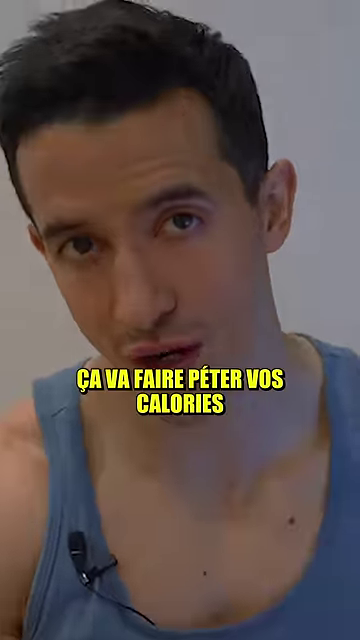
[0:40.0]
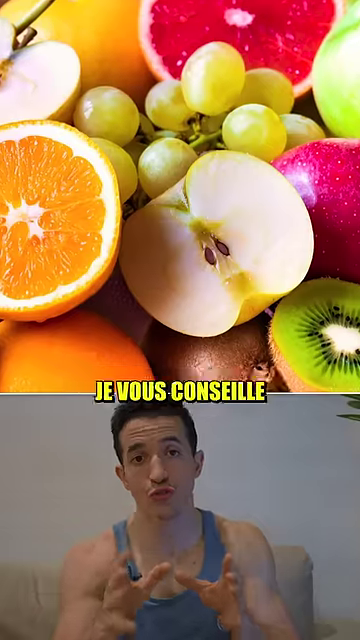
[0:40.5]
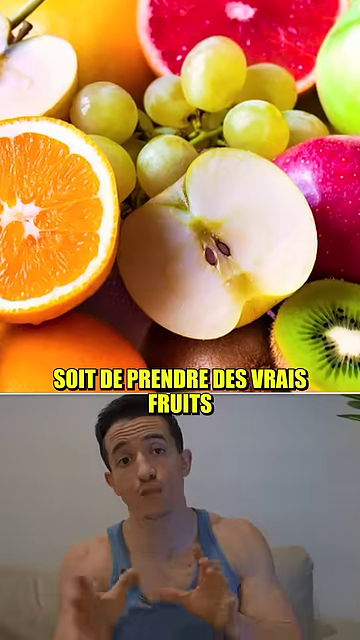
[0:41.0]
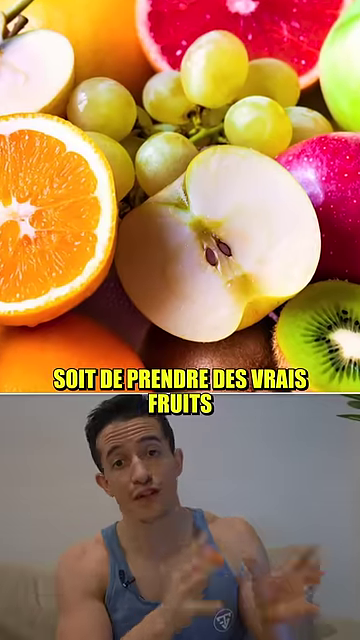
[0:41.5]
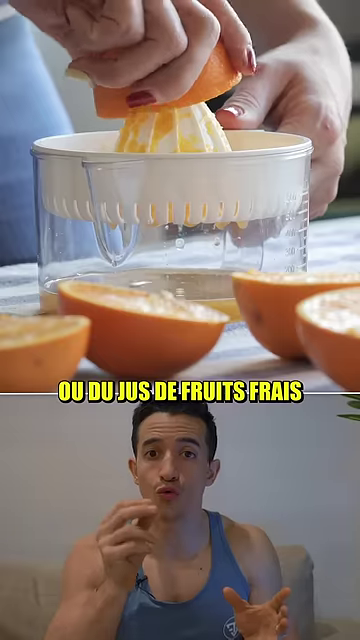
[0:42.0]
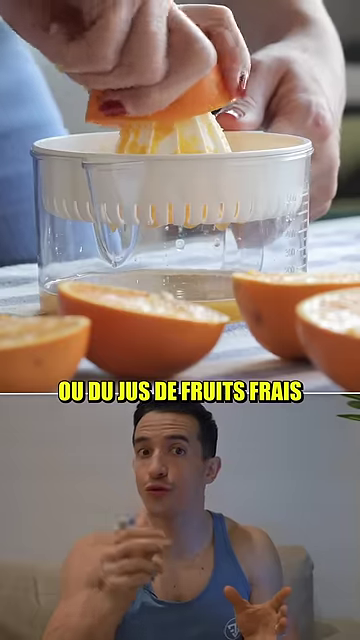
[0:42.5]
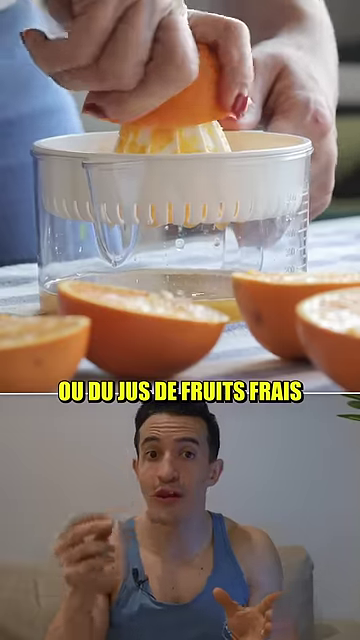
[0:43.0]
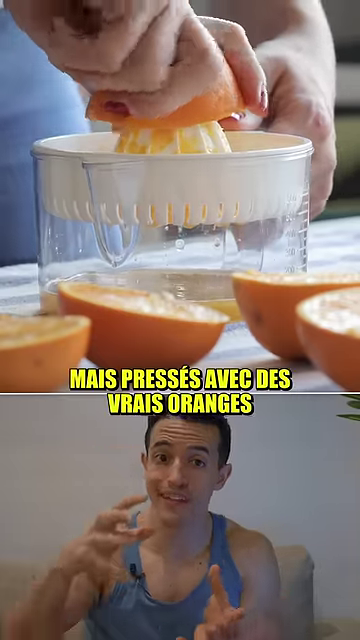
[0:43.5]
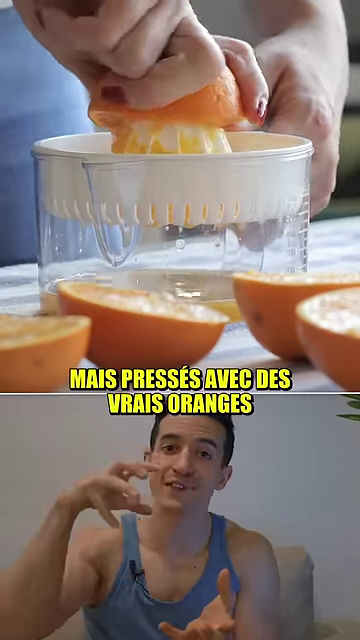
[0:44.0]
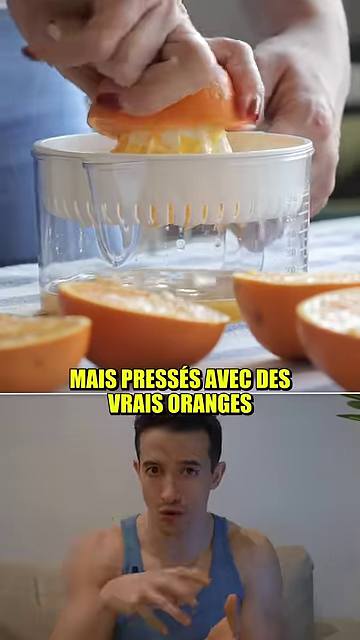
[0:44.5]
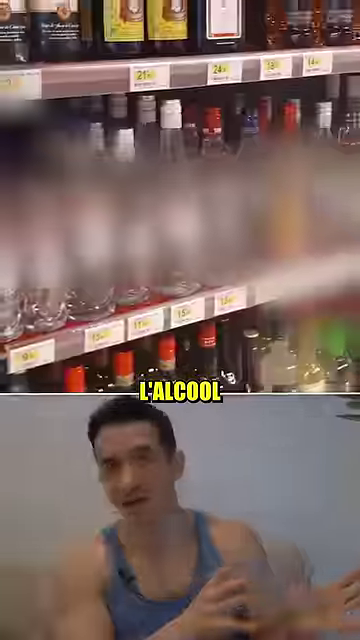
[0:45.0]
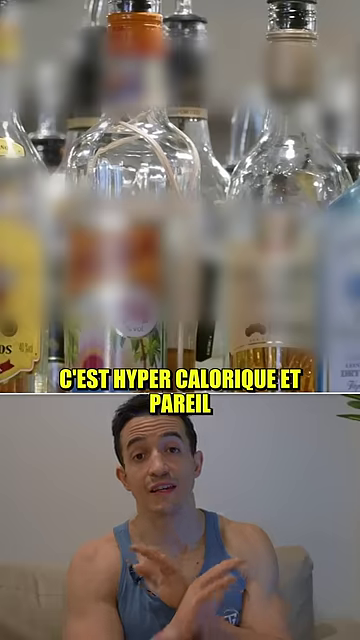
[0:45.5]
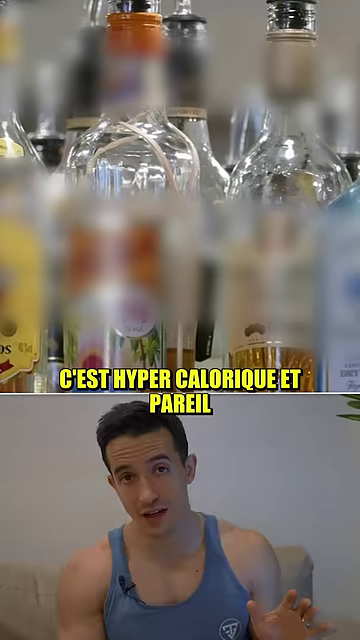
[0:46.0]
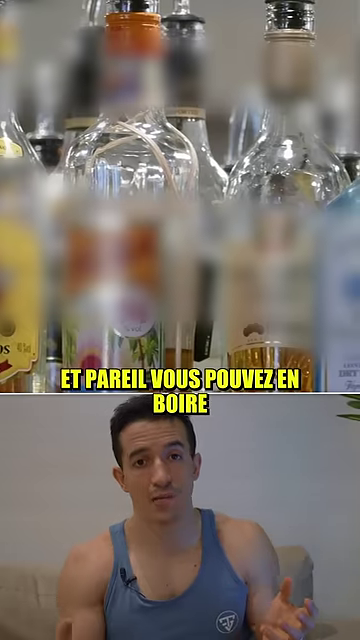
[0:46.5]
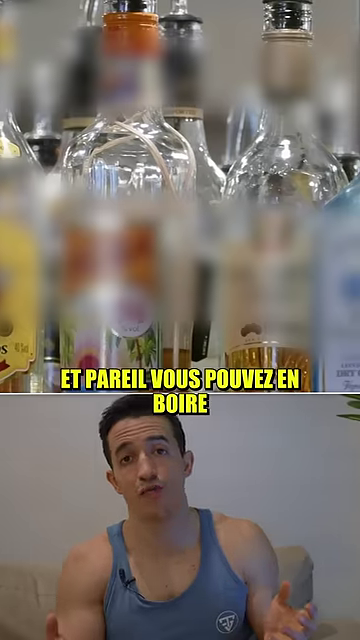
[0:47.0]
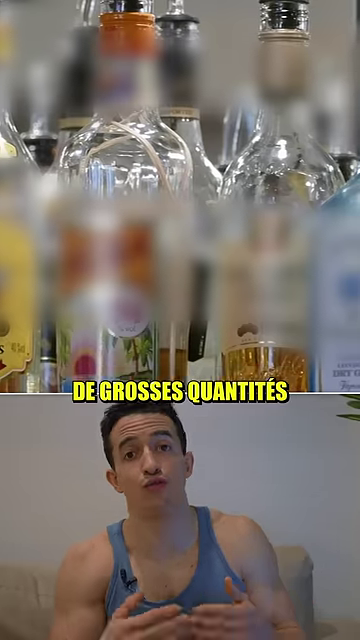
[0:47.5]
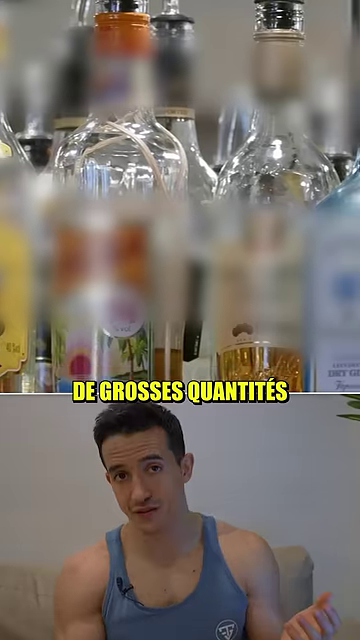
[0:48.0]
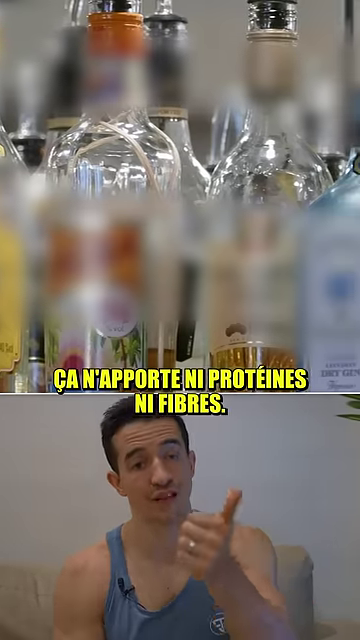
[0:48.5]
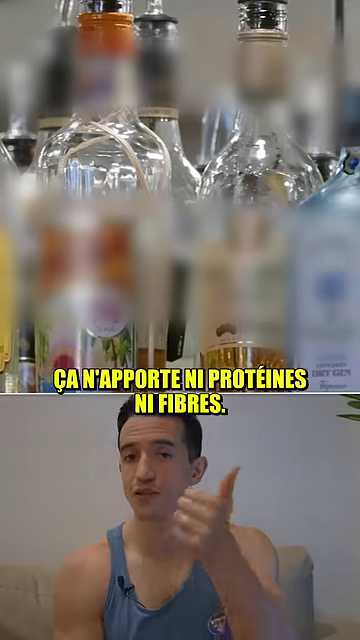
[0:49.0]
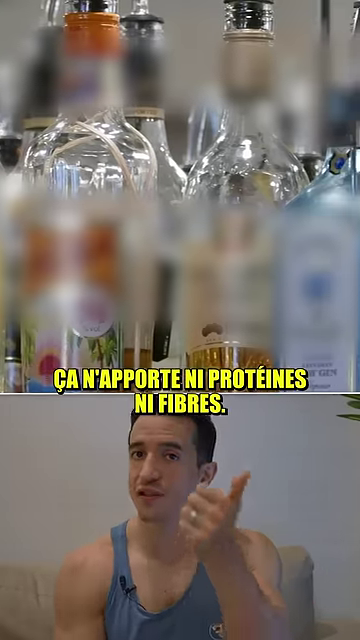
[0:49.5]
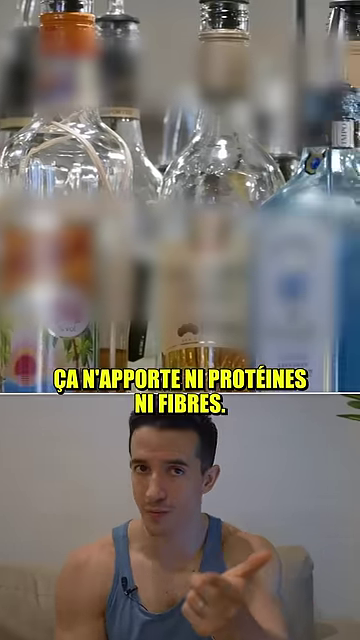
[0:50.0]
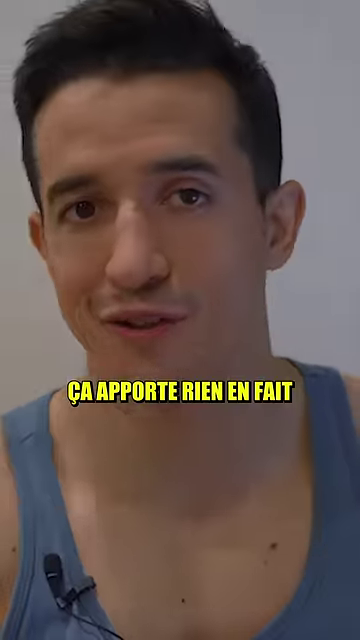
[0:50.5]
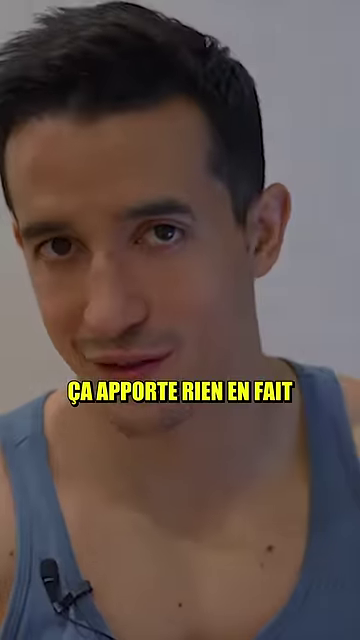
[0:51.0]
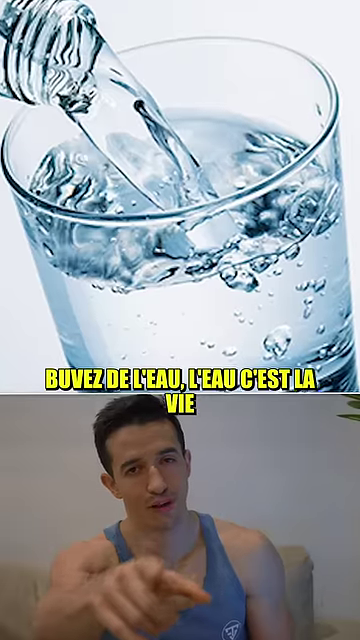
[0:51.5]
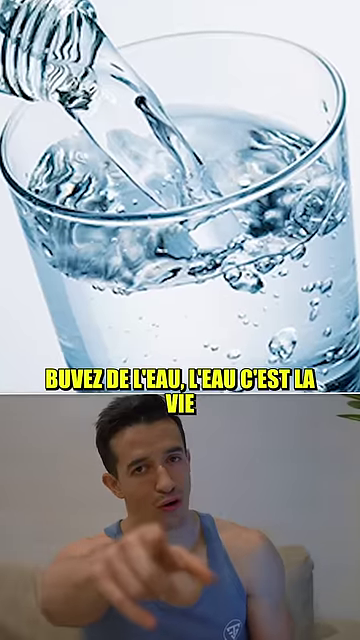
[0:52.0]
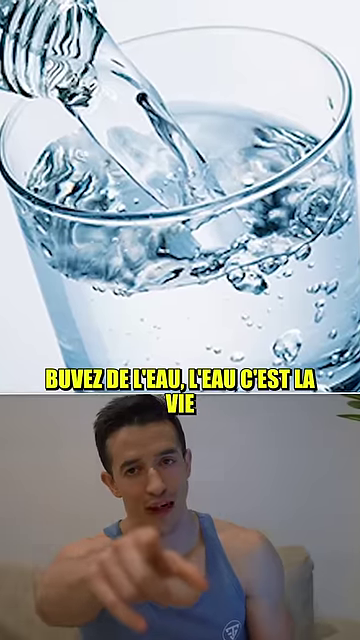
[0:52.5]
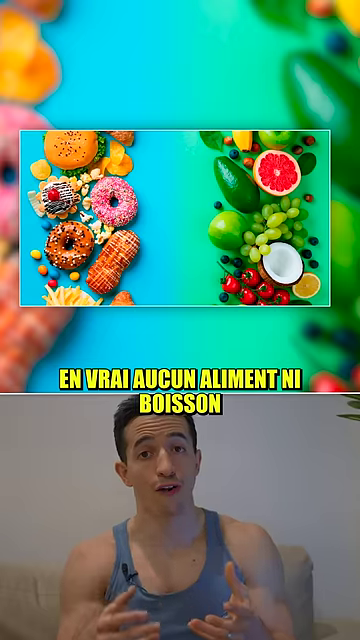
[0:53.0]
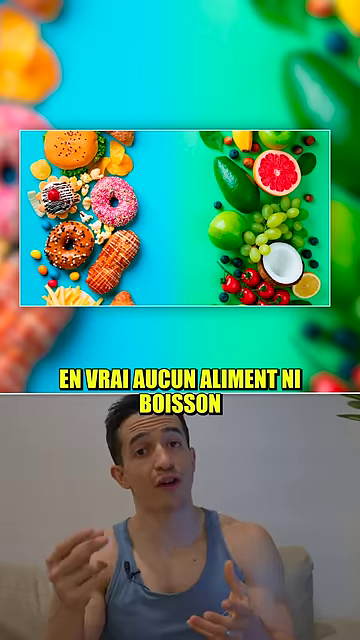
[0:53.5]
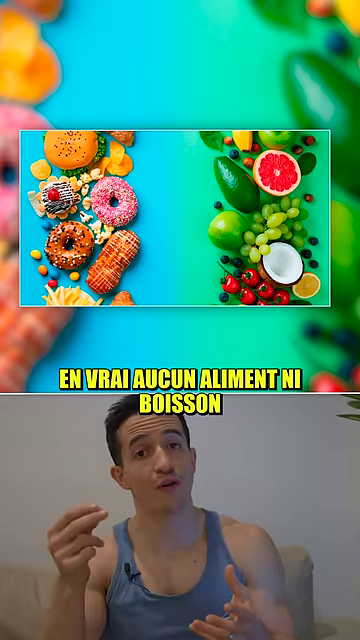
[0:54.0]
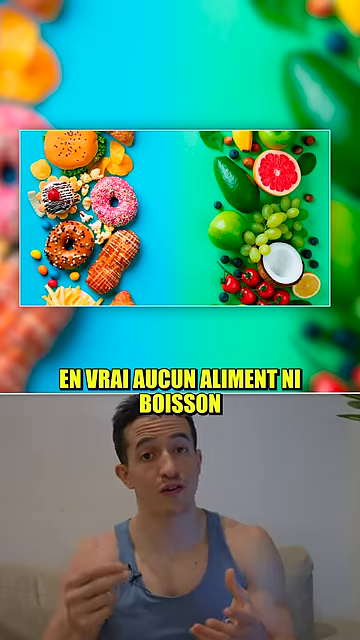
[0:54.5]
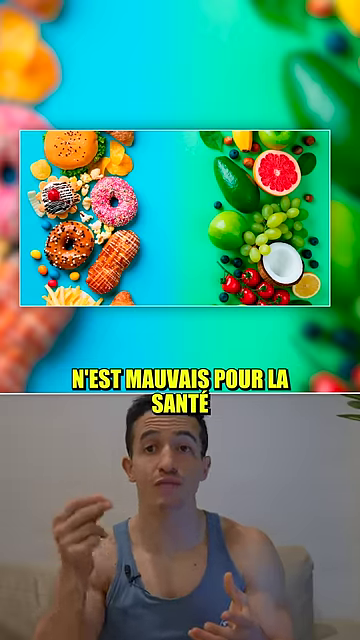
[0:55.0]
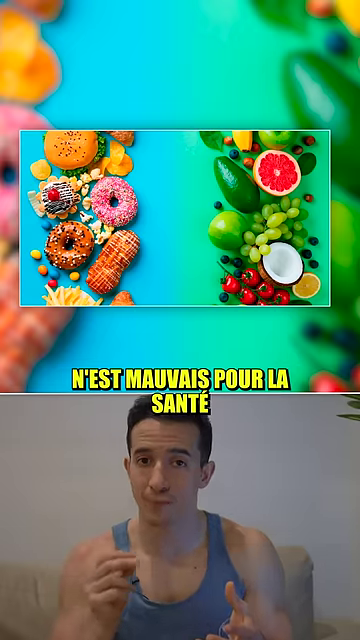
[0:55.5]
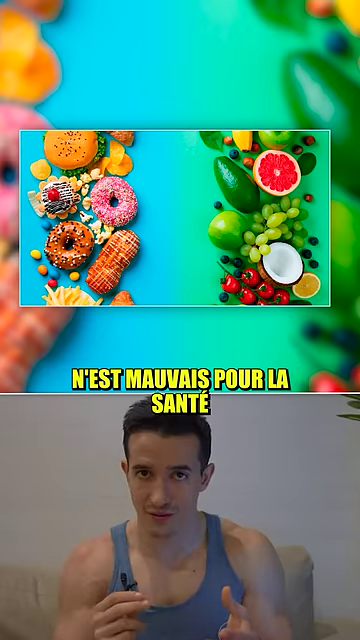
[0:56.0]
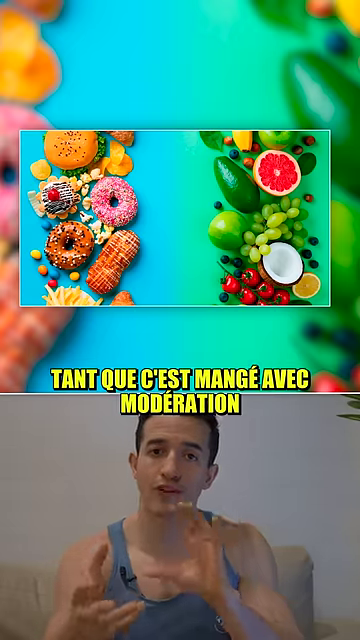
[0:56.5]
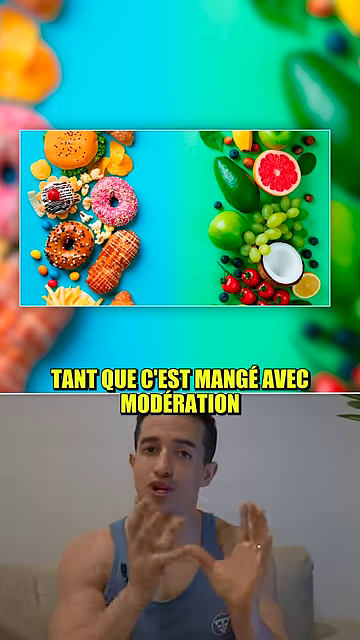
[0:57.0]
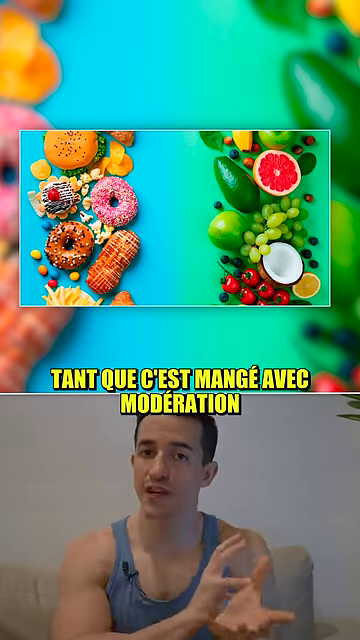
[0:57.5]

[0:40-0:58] The young man appears in a close-up, taking up the full screen, with yellow text over him: "CA VA FAIRE PETR BOS calories". He is then reduced to the bottom half of the screen, and the top shows various fruits, including grapes, apples, oranges and kiwi, with superimposed text ending "DES VRAIS fruits". Someone juices oranges on a hand juicer at the top, with text over it ending "DES VRAIS oranges". The word "alcohol" appears with alcoholic beverages, then more alcohol in bottles above, with the text "ETPAREL VOUS POUVES EN BIRE". More alcohol is shown above in sort of clear bottles with clear liquid, with the text "DE GRO SSES quantities", and the text then changes to a line beginning "CA N'A". A full screen of the young man is shown again, with text beginning "CA APORTE". An image of a clear liquid, seemingly water, in a clear glass appears at the top, with yellow text over the front: "BUVES DE L'EAU, L'EAU C'EST LA VIE". The next split image shows at the top a row of doughnuts on the left and a row of fruits and vegetables on the right, with yellow text below: "EN VRAI AUCUN ALIMENT MI BOISSON". The text continues, later including the words "MANGE AVEC moderation".